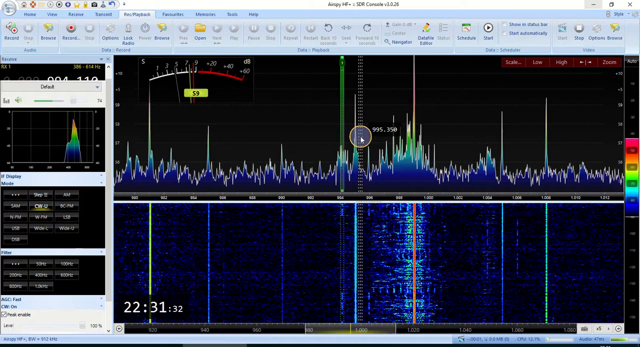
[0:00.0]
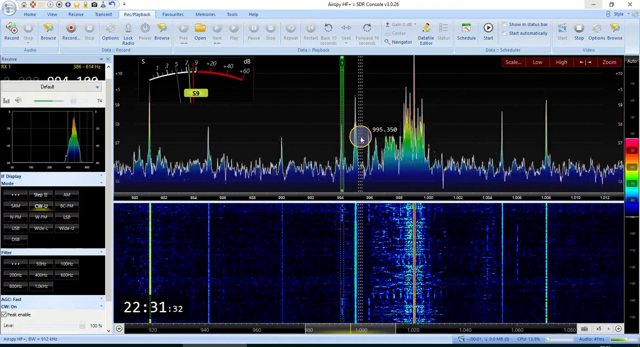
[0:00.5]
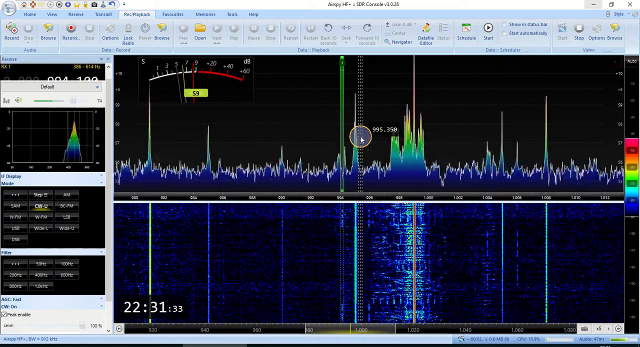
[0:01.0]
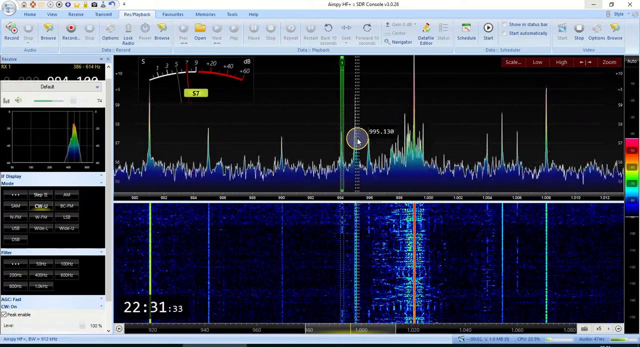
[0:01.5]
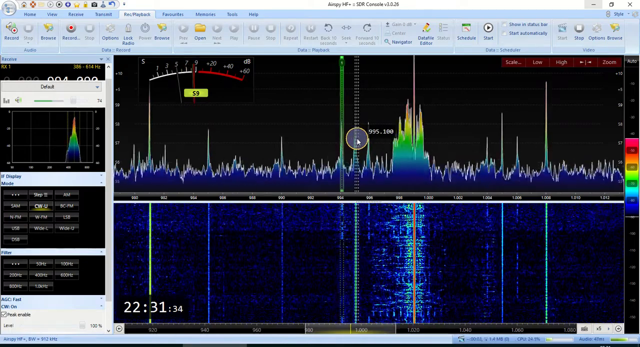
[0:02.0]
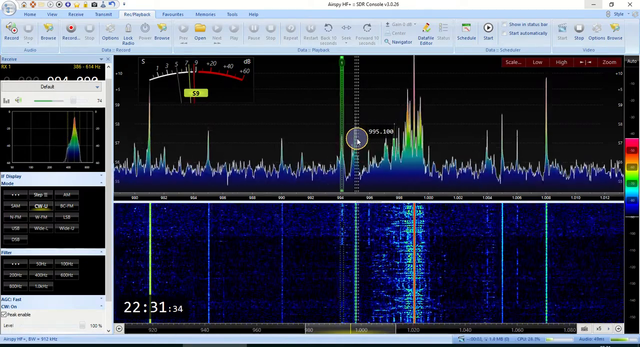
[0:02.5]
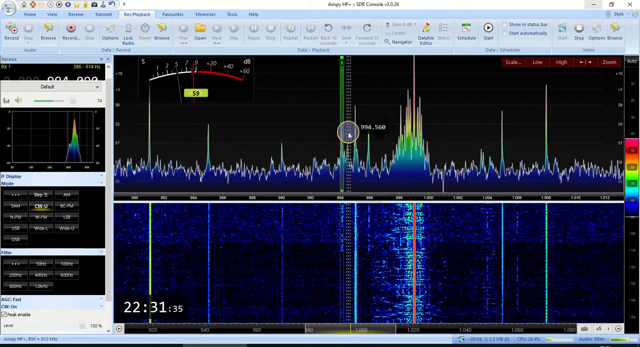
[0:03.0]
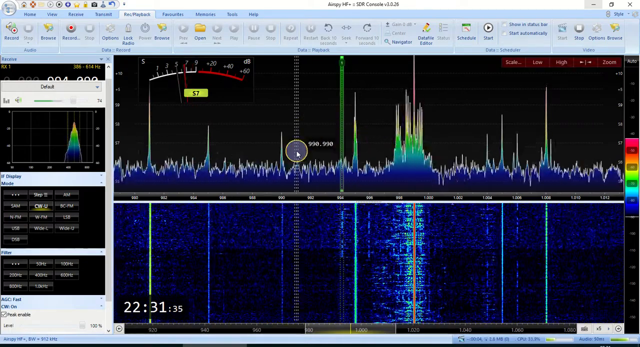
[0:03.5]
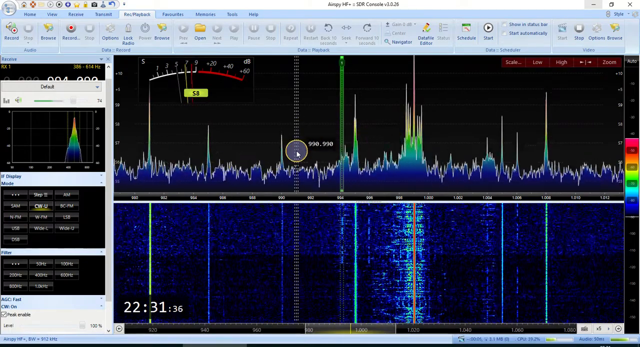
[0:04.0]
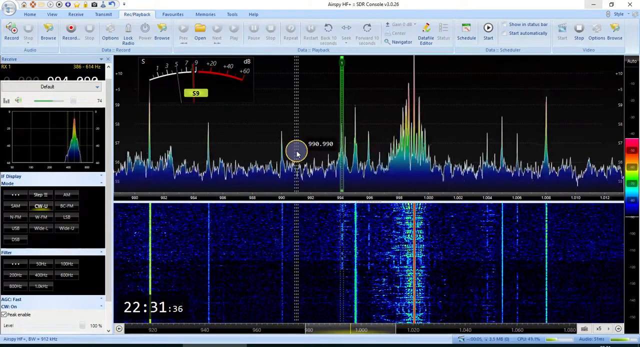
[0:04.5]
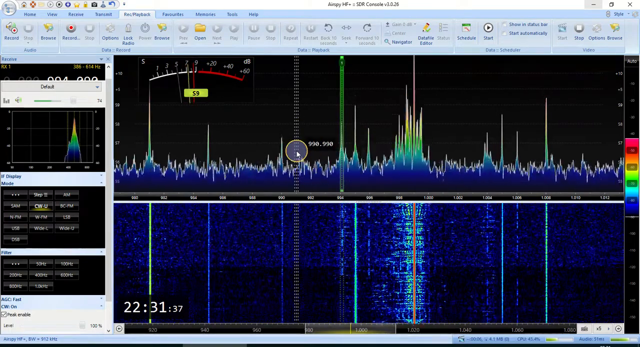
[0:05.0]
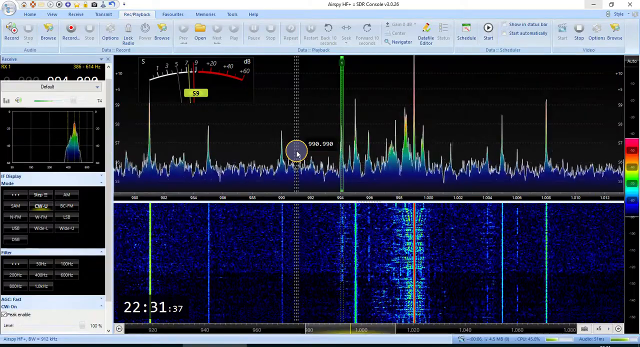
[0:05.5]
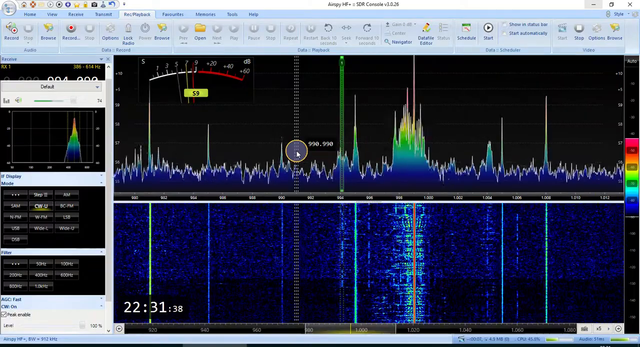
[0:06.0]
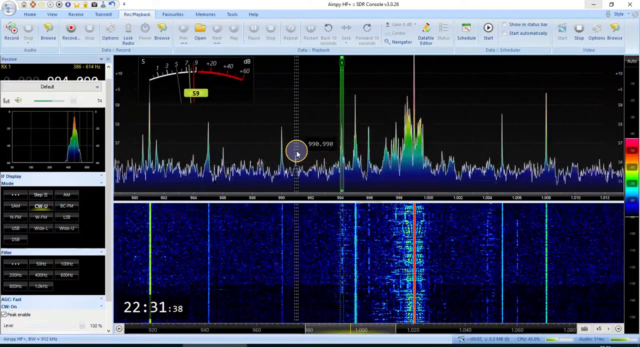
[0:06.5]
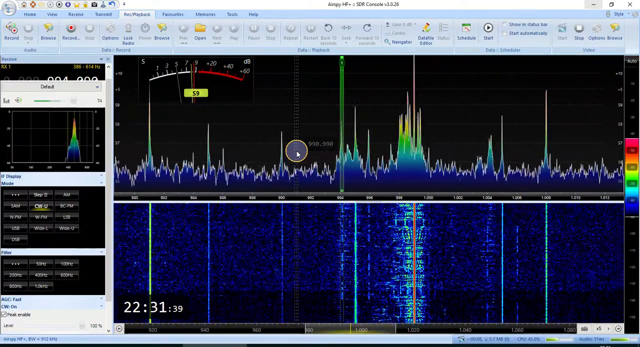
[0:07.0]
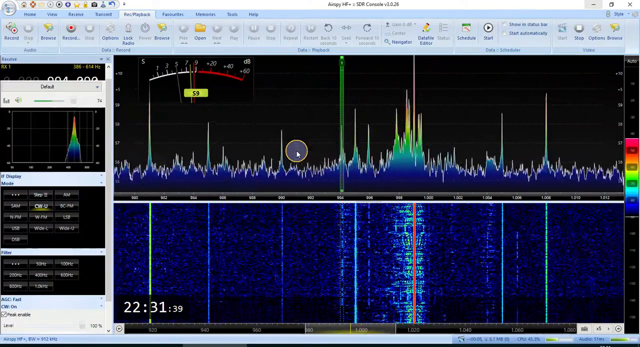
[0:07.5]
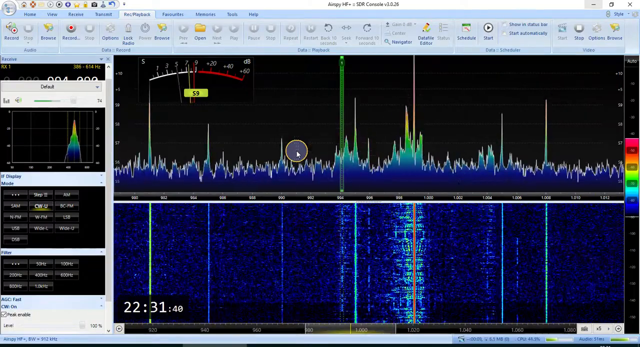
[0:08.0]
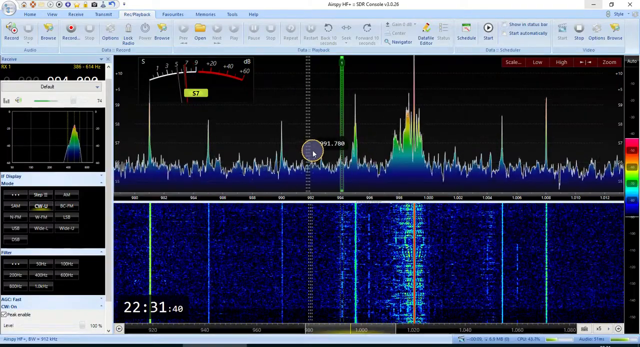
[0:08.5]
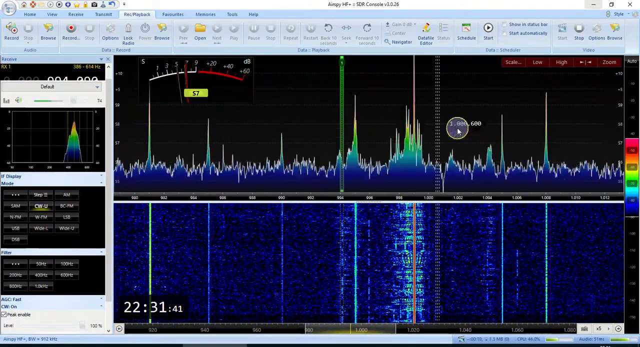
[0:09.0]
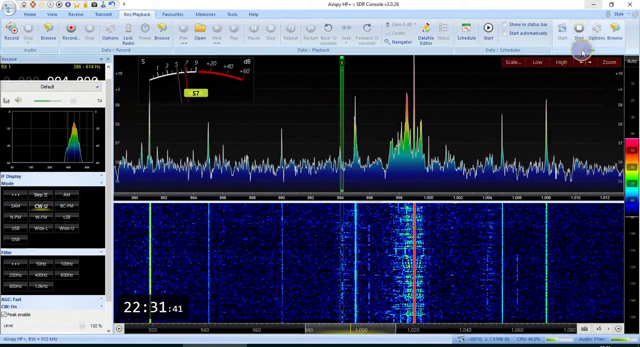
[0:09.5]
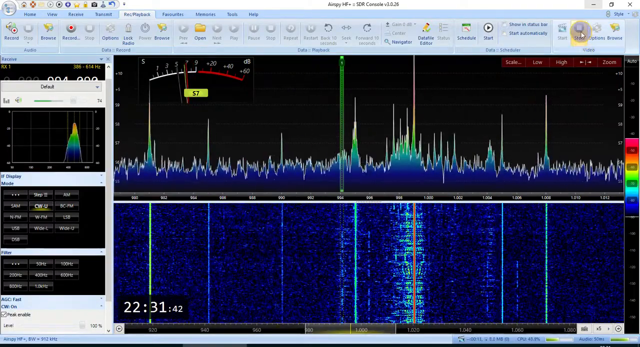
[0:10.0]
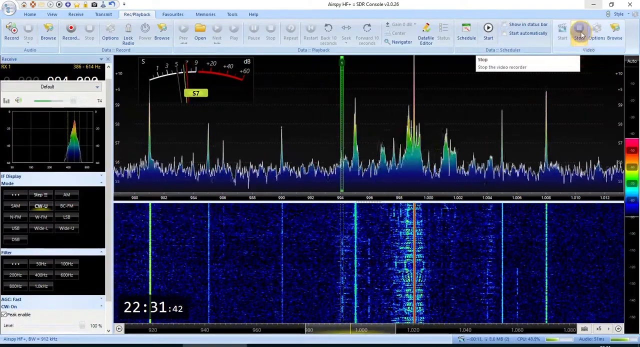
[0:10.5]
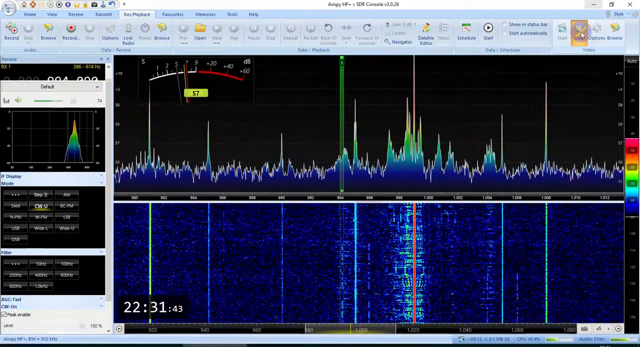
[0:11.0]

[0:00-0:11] What appears to be a spectrograph or a similar kind of program is shown in a screen recording. The person using it seems to be inspecting some frequencies, apparently searching for something in them, though it is unclear what. Not much happens; the activity is mostly picking up some frequencies in the middle section. The video is of very low quality, making it hard to make out what the various options on screen are.